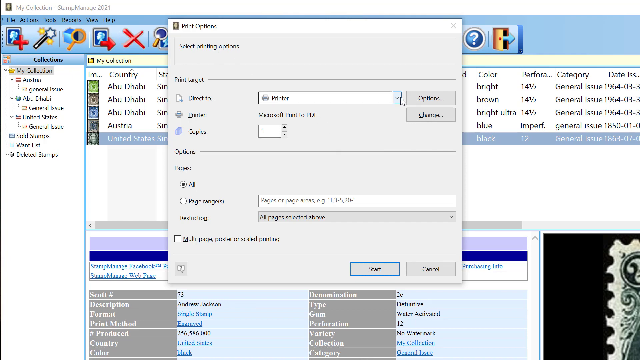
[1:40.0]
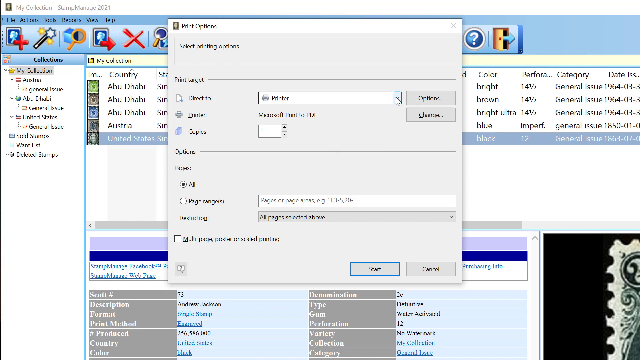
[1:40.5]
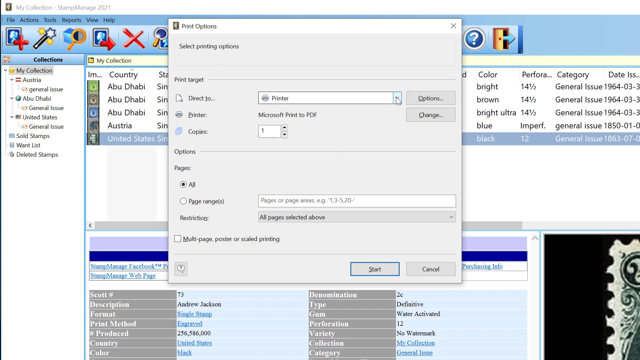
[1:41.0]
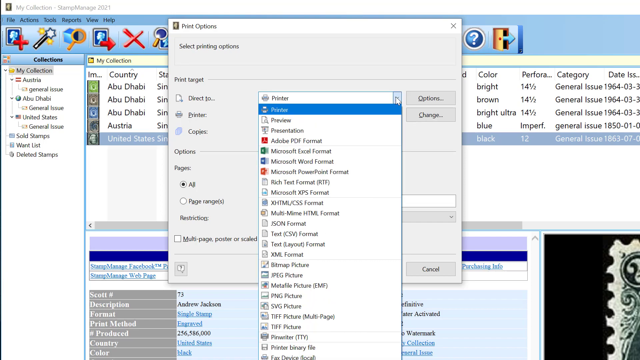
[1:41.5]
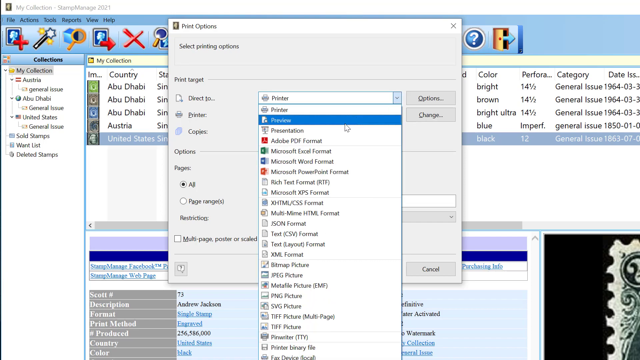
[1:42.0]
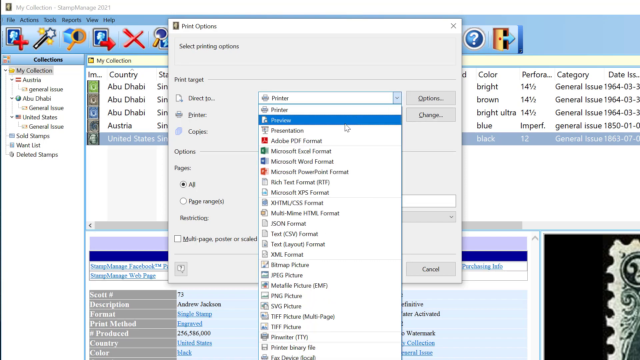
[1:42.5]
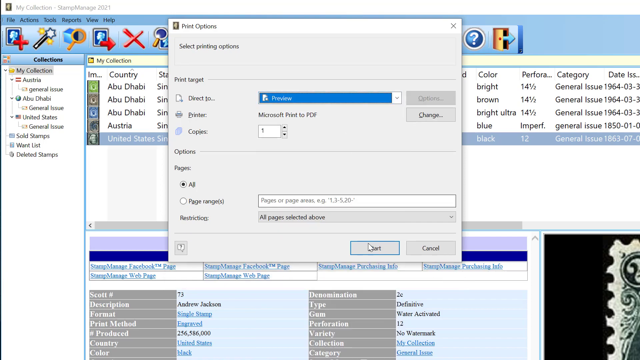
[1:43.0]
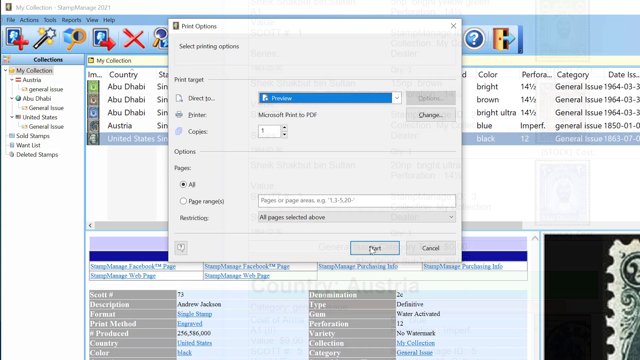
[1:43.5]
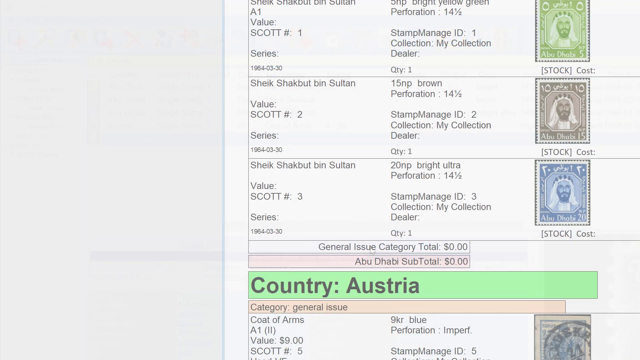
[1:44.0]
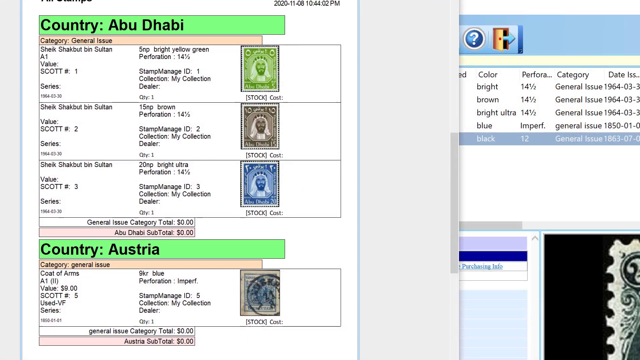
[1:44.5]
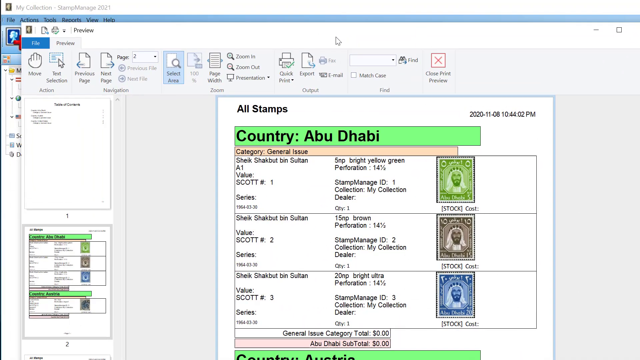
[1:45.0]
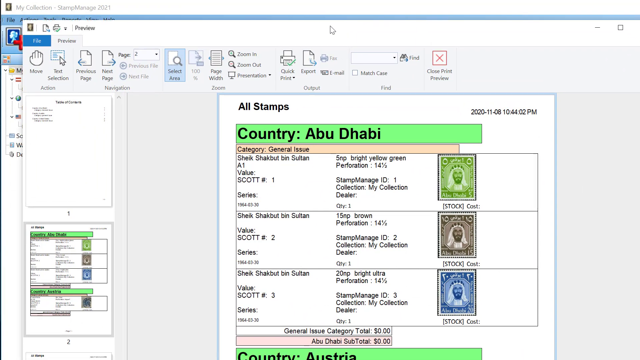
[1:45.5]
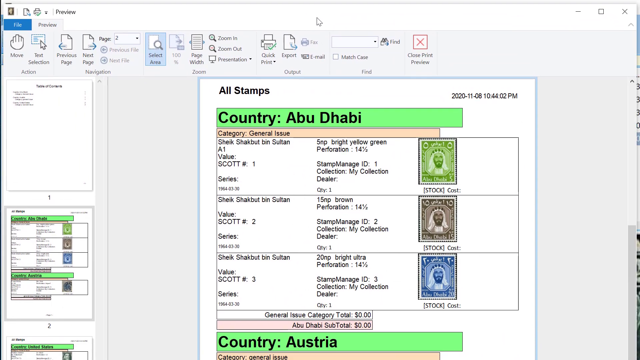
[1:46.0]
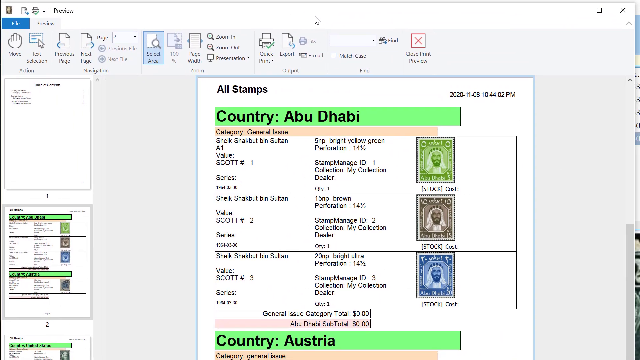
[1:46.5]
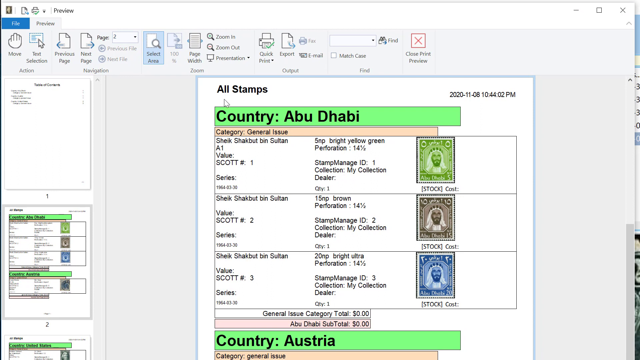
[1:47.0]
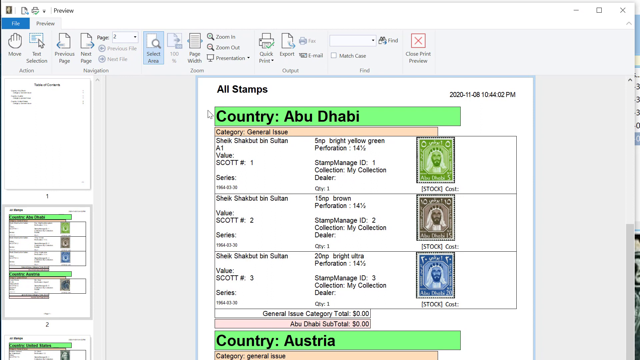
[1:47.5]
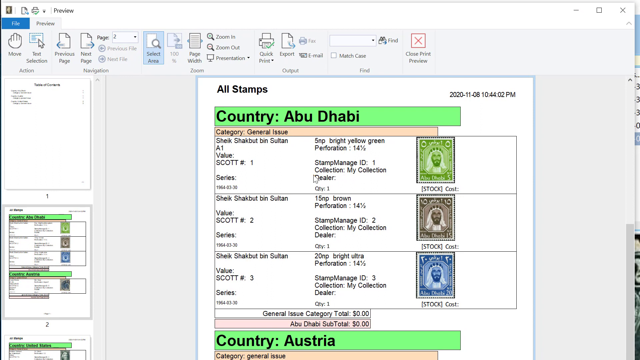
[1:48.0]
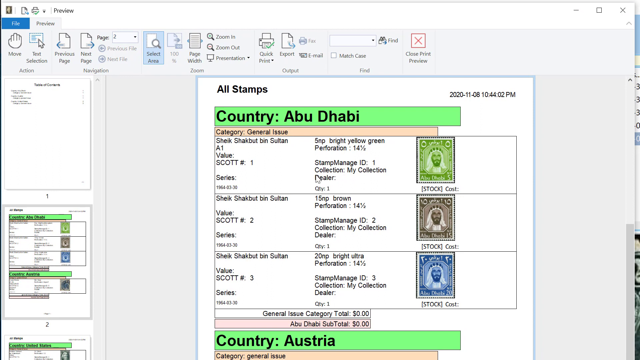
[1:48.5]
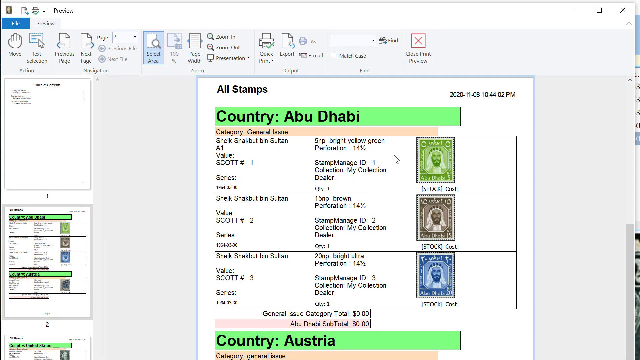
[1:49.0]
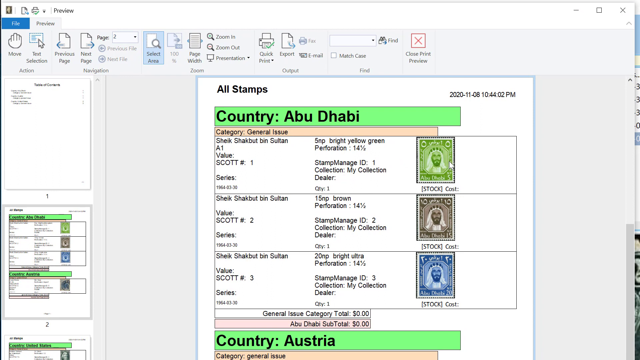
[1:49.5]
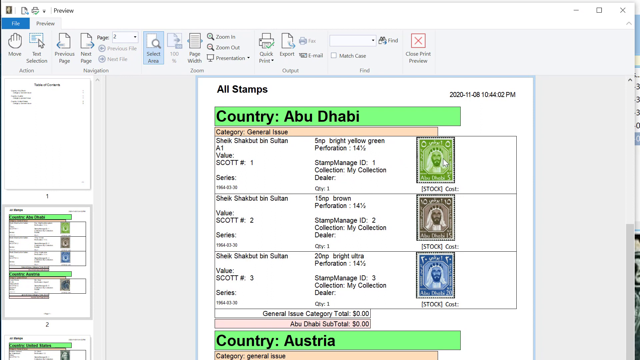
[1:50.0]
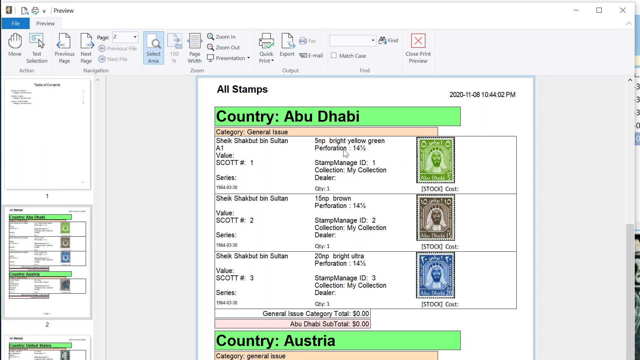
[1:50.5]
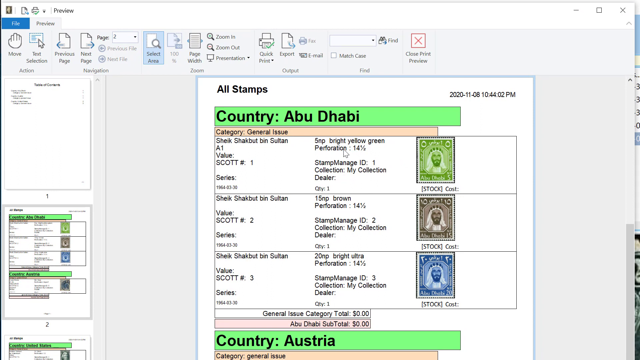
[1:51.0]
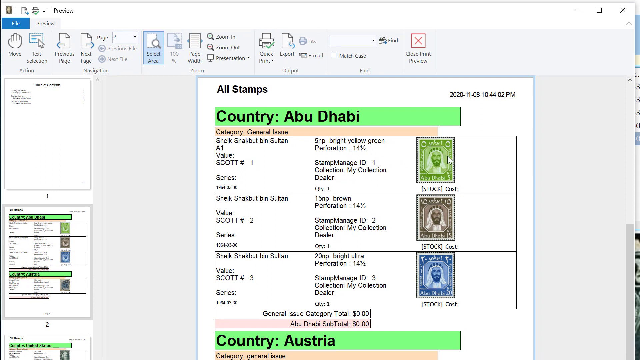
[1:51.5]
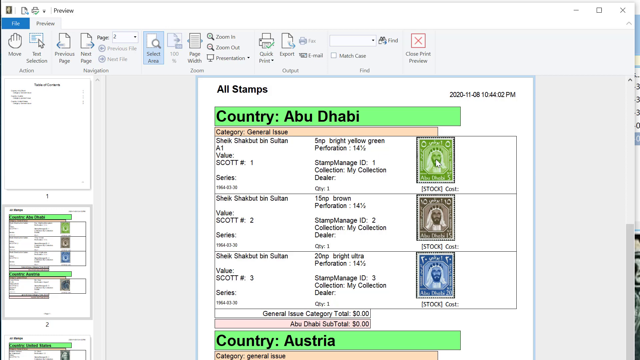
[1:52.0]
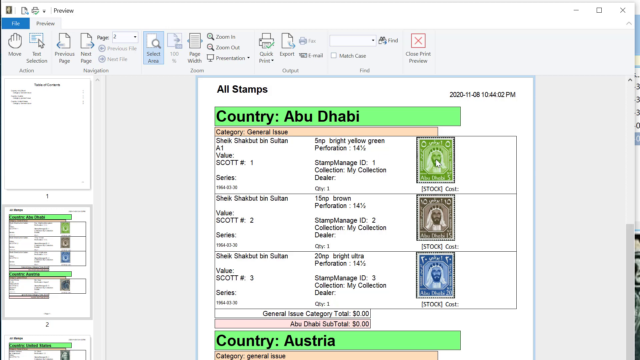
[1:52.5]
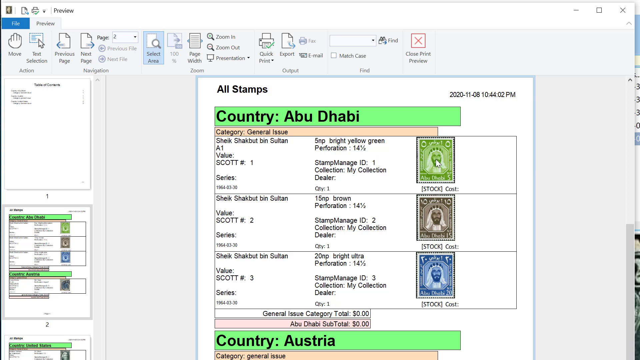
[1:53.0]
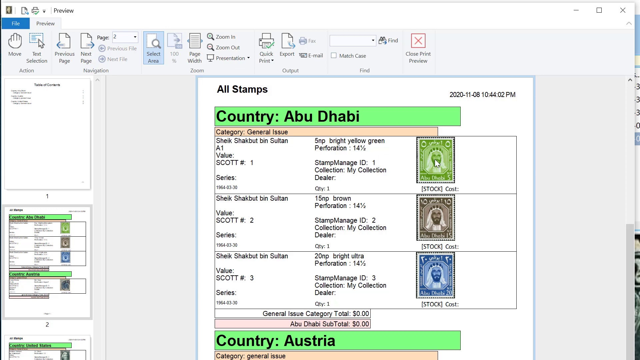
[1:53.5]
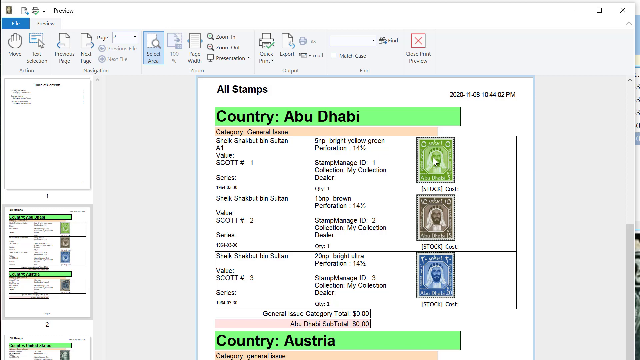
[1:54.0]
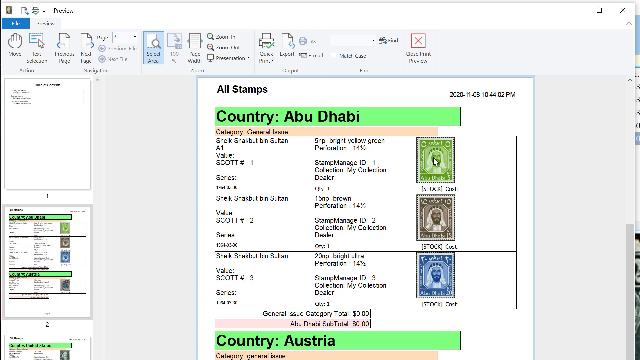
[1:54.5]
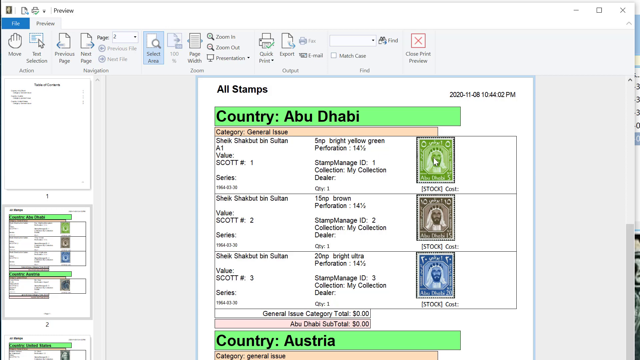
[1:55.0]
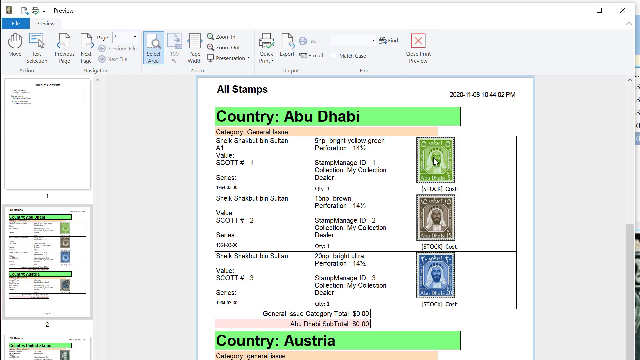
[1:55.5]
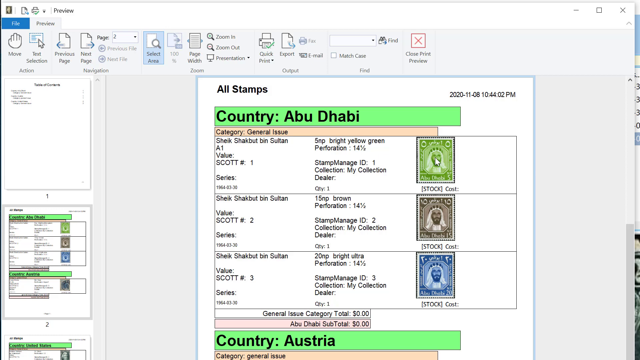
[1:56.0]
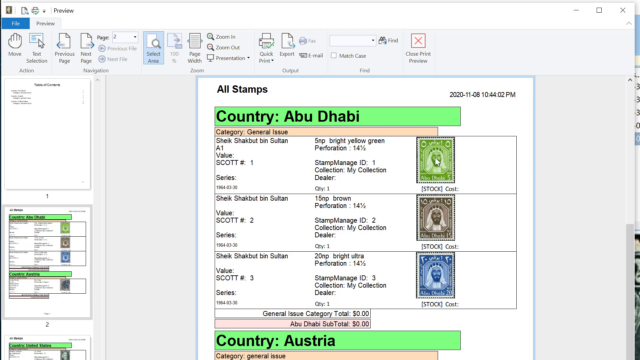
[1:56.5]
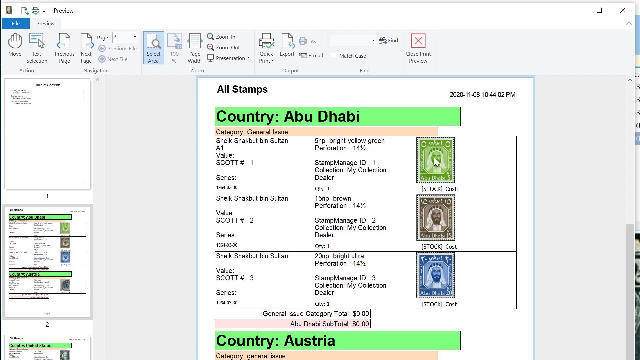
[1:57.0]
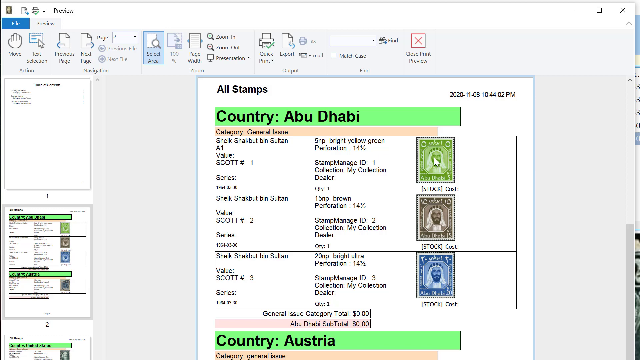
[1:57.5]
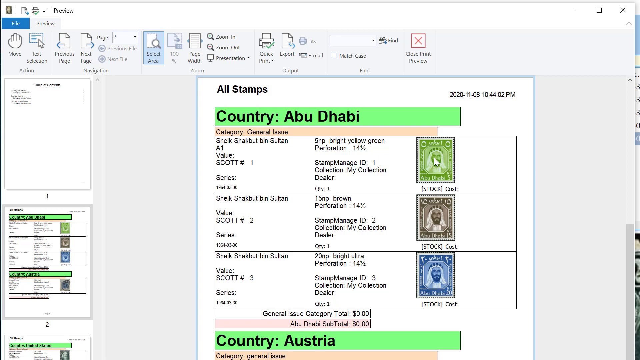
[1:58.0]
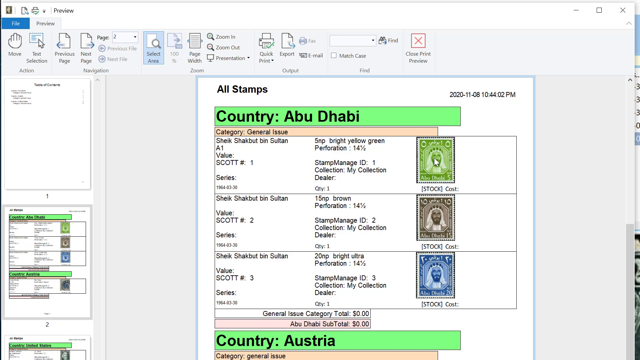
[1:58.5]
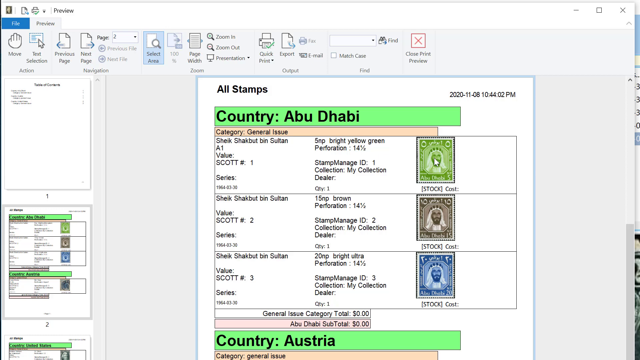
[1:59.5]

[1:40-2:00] The earlier Stamp Manage window is open in the background, with the Print Options window on top of it. The person opens a drop-down menu, clicks "Preview", the second option, and then clicks the next button at the bottom of the window. This opens a preview of a printable version of the stamp collection. At the top of the preview page is the text "All Stamps", and below it a green box with black text reads "Country Abu Dhabi". Beneath that is a table of the collected stamps, showing three Abu Dhabi stamps: a green one, a brown one and a blue one. Further down, the Country Austria stamp is also included for printing.